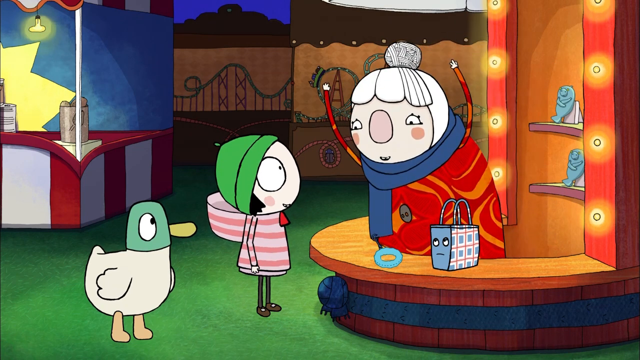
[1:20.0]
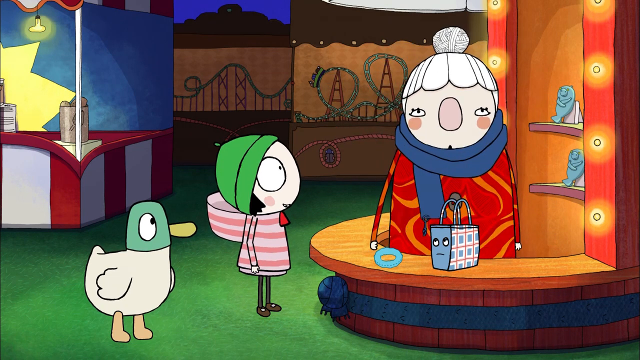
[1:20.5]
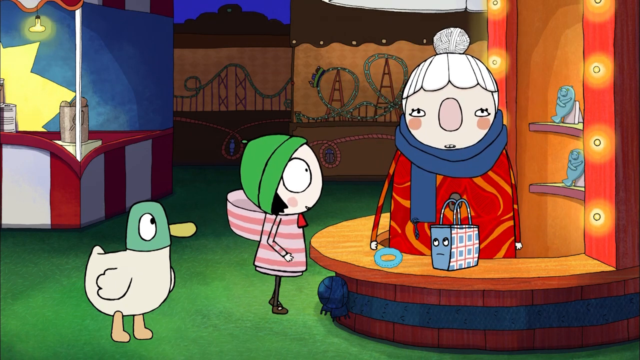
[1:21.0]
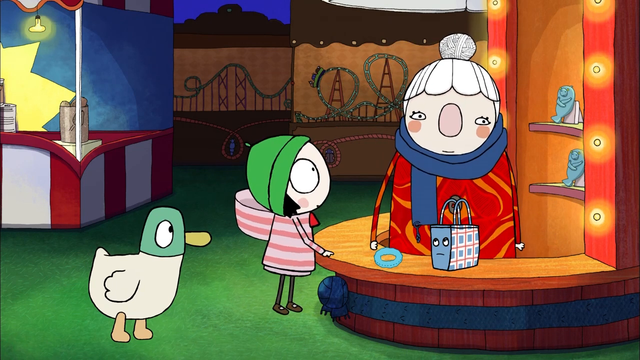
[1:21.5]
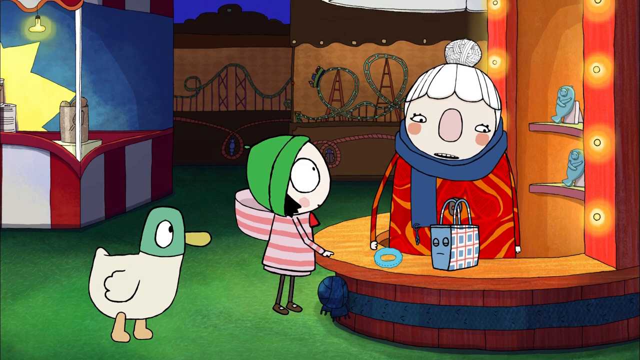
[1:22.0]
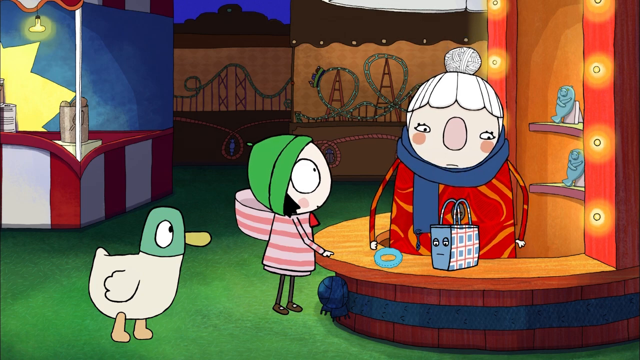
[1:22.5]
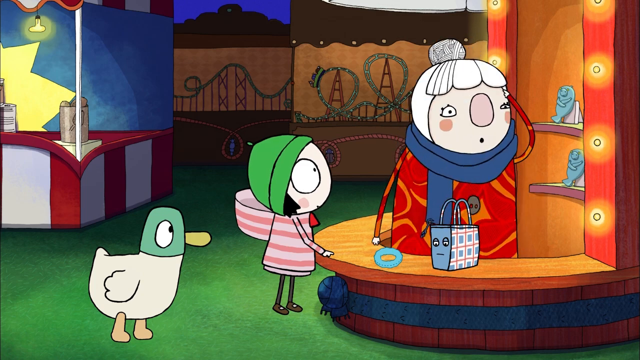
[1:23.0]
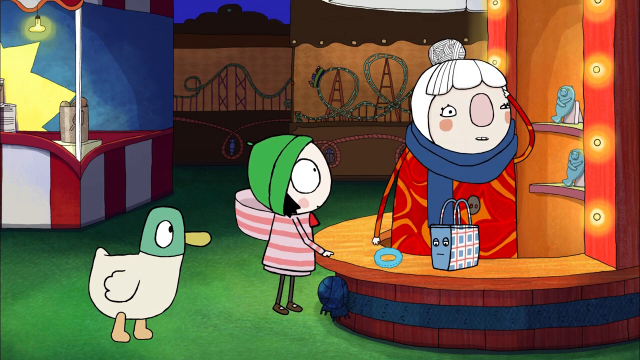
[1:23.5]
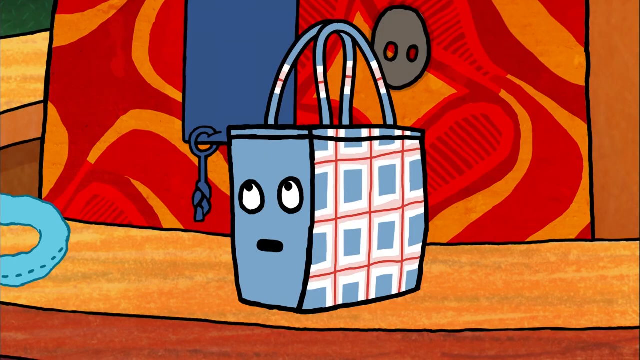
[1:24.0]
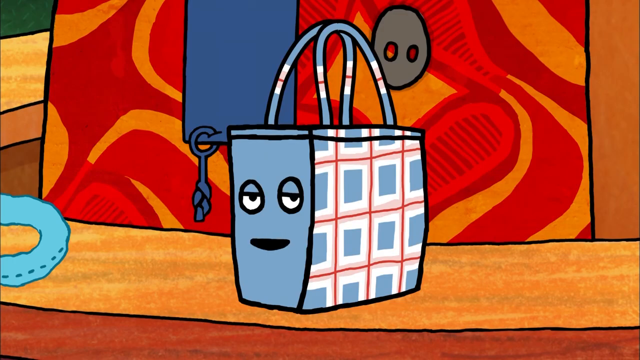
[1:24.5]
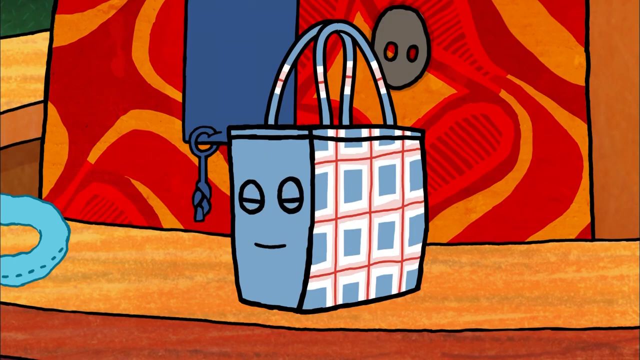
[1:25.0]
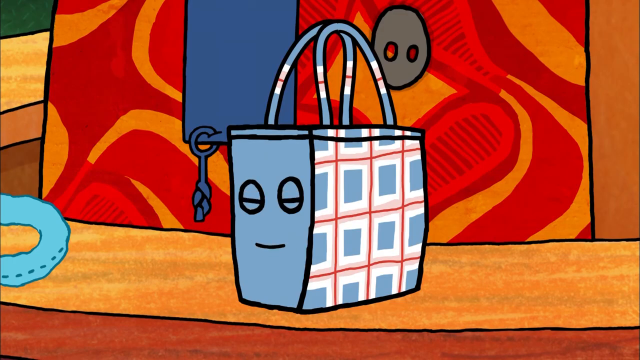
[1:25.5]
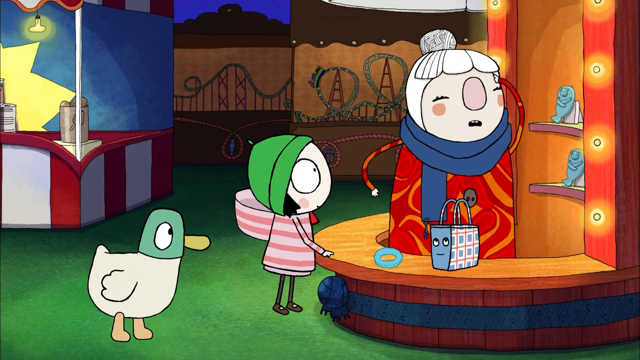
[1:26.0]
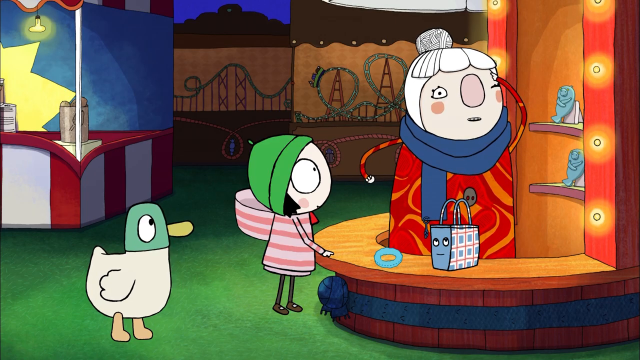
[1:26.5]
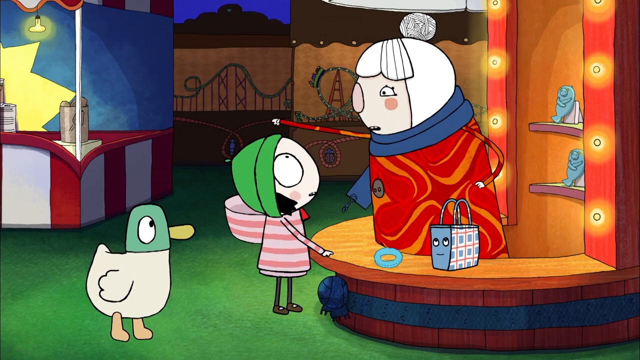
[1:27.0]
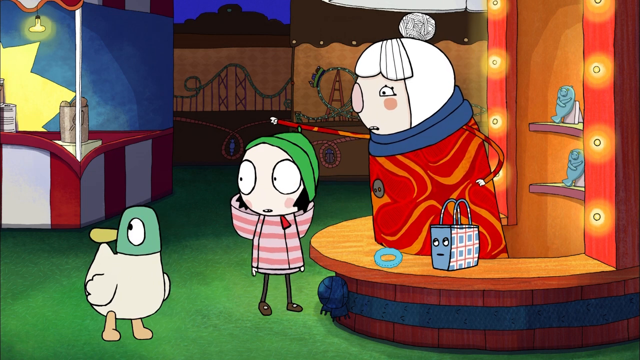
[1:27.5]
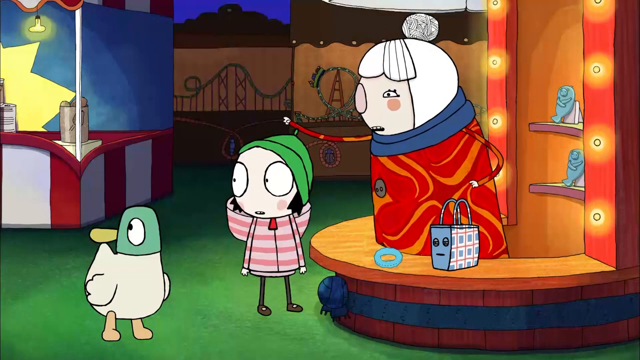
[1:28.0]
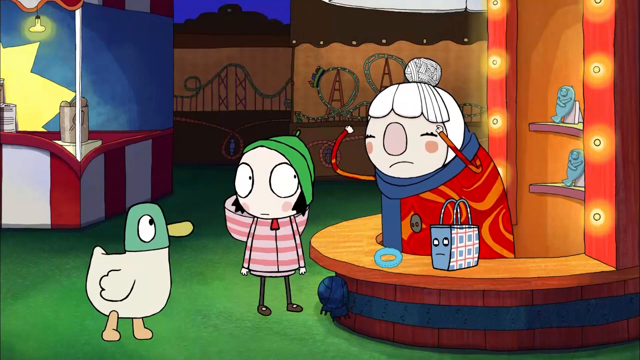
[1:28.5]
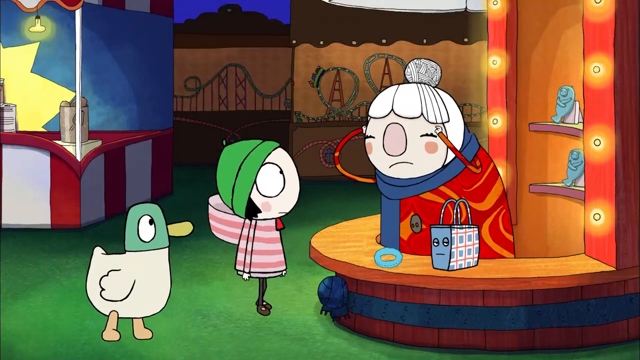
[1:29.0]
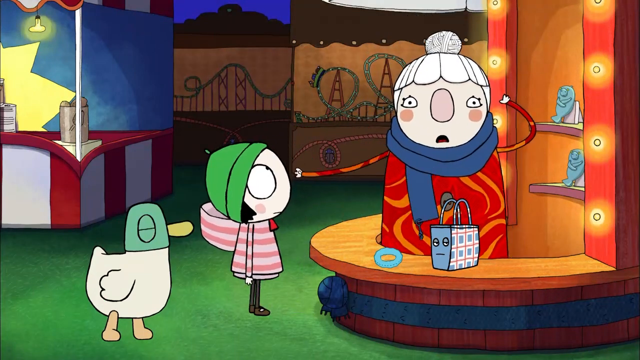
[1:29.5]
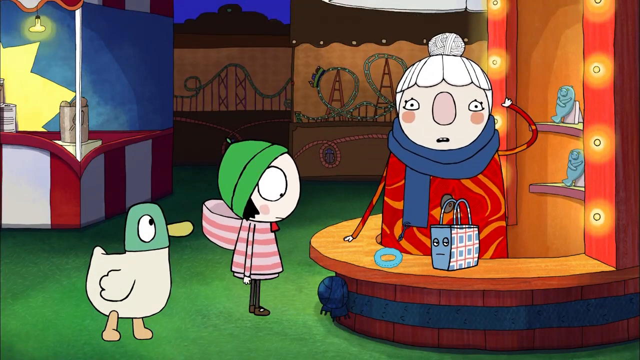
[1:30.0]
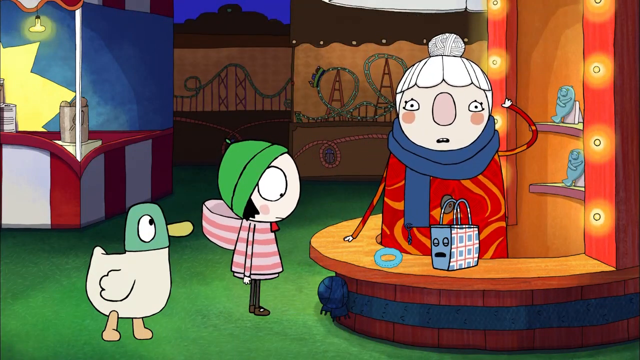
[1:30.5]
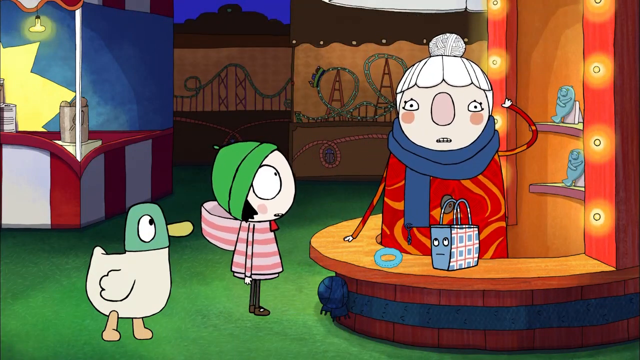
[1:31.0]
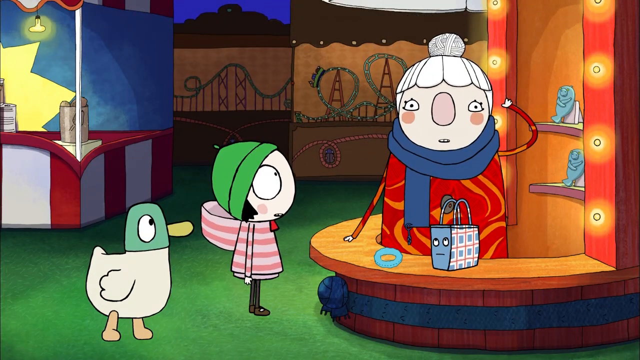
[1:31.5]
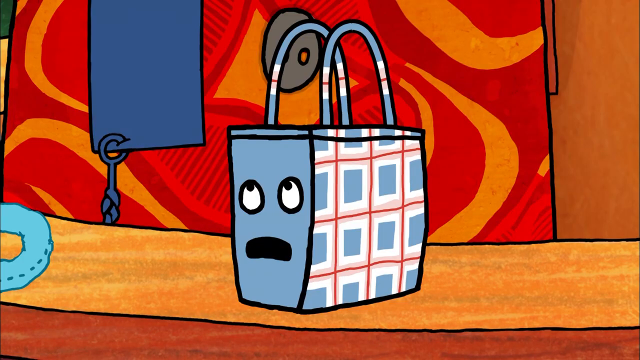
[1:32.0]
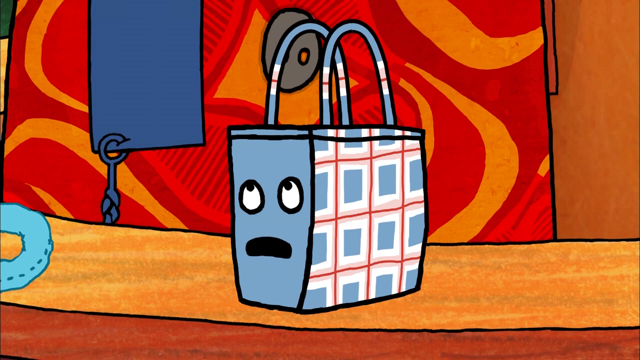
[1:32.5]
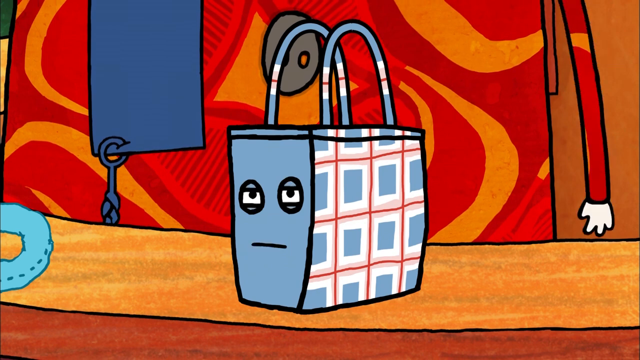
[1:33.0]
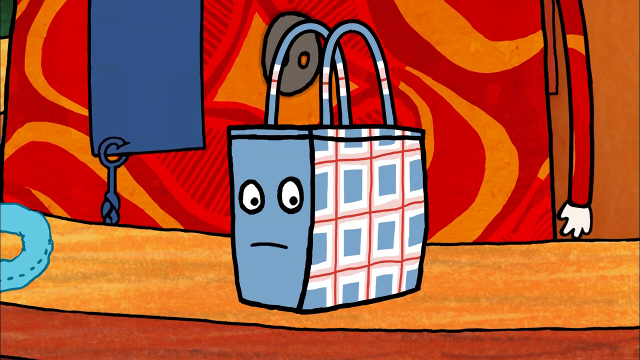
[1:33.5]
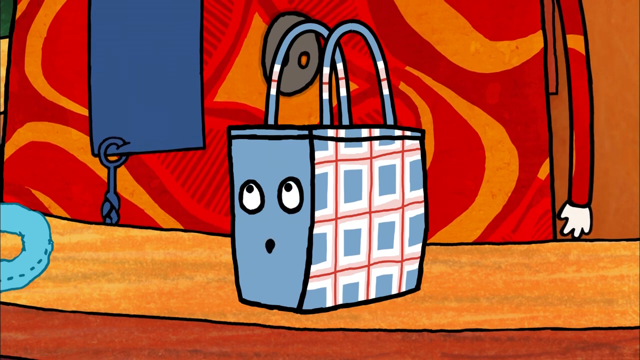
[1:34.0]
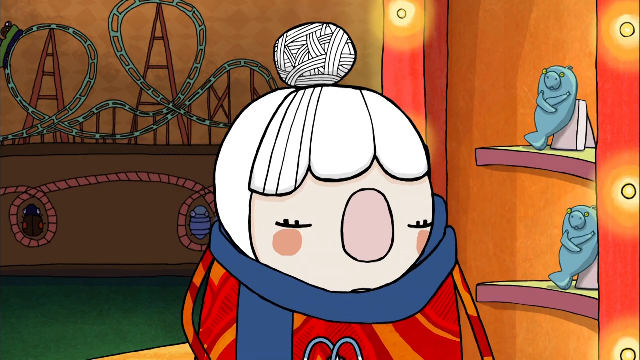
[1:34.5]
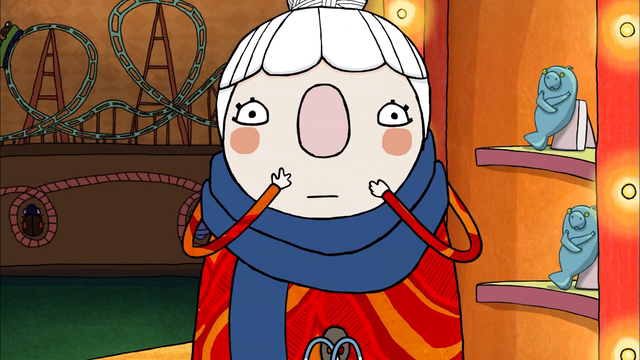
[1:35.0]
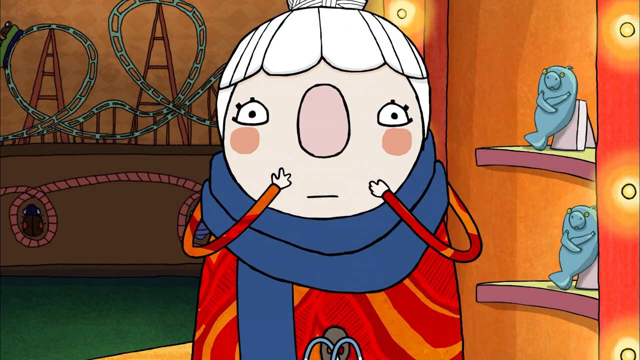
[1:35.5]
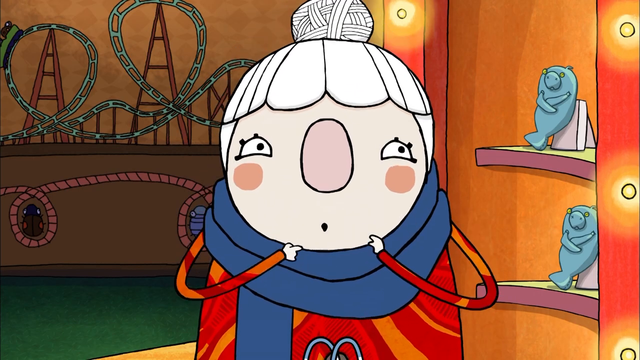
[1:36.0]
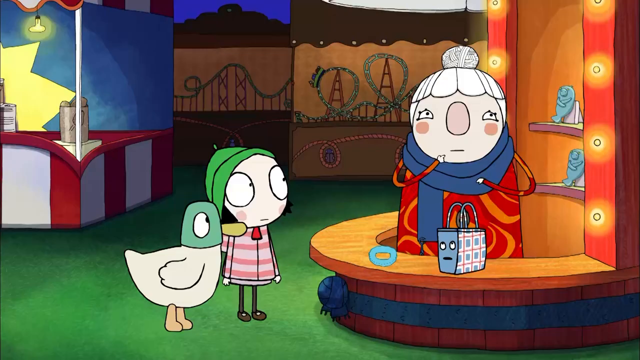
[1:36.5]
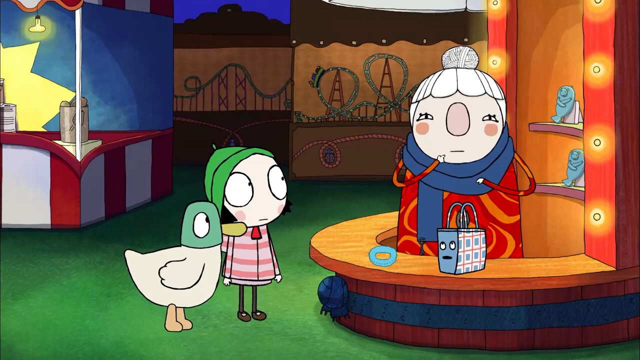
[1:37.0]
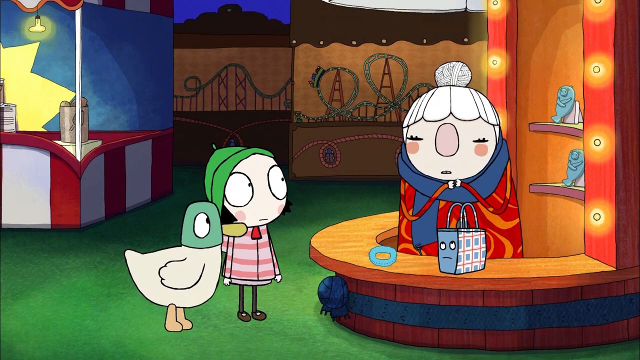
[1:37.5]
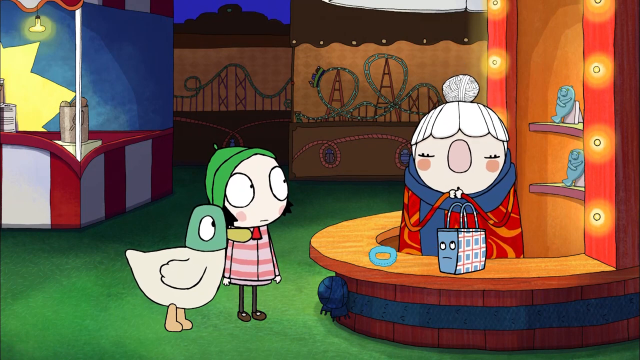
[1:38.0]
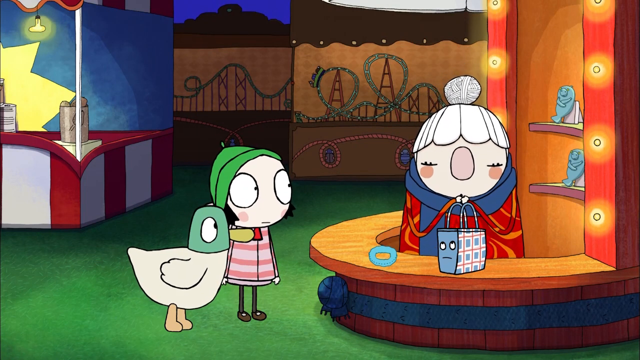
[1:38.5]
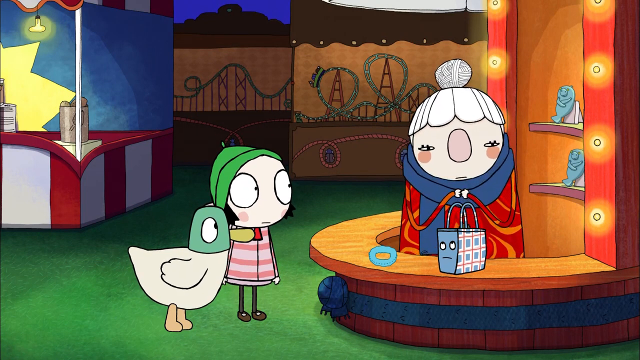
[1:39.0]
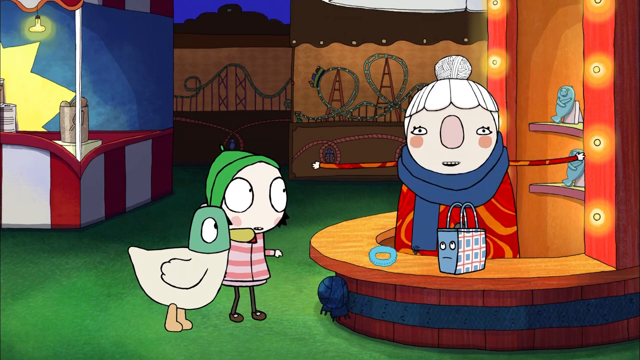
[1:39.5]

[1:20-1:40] A dog and a girl are at the event and seem interested in something the seller is selling. There is a bag that speaks, and it belongs to the seller. The seller points behind them, and they look away in that direction; she touches her eyes and continues the conversation with the bag while the dog and the girl look where she pointed, then back to her. The bag is in a conversation with its owner about something that is making her a bit miserable. She seems to be trying to conceal from the dog and the girl that she is crying.